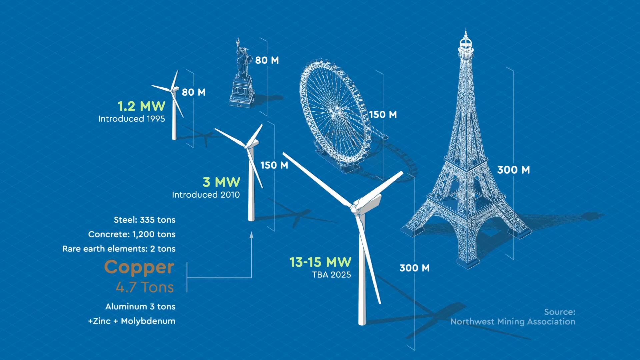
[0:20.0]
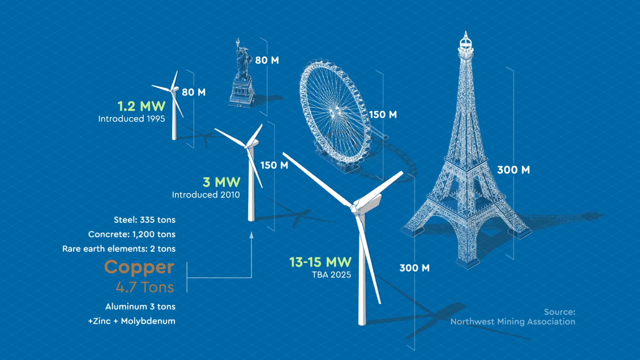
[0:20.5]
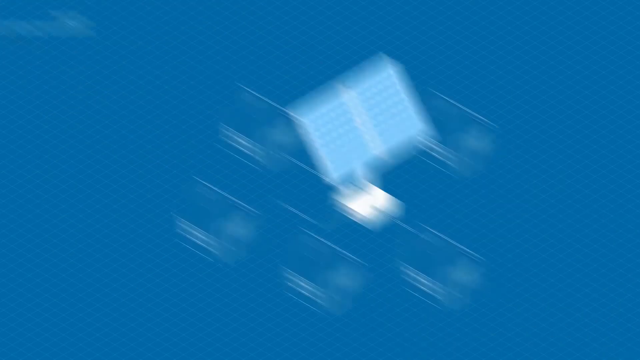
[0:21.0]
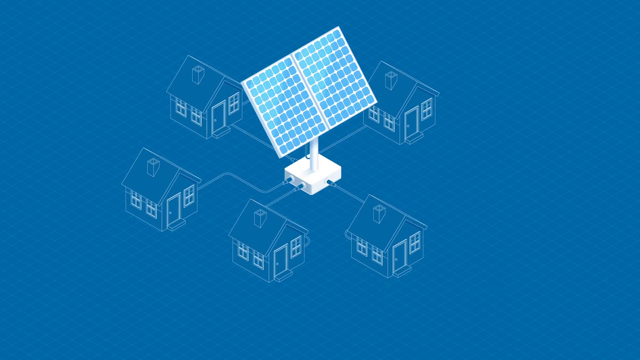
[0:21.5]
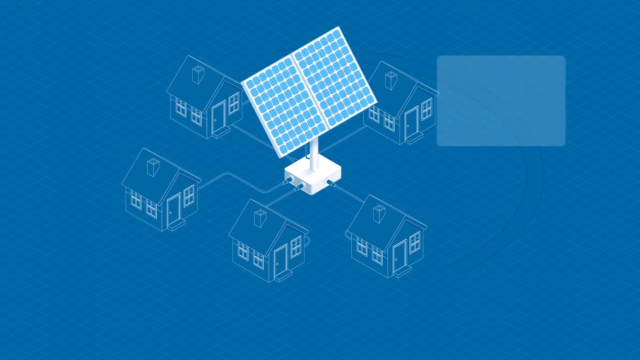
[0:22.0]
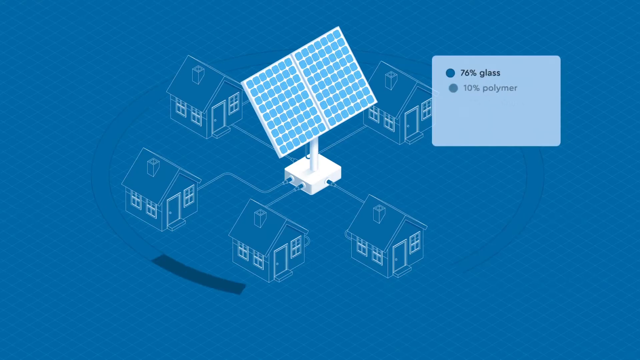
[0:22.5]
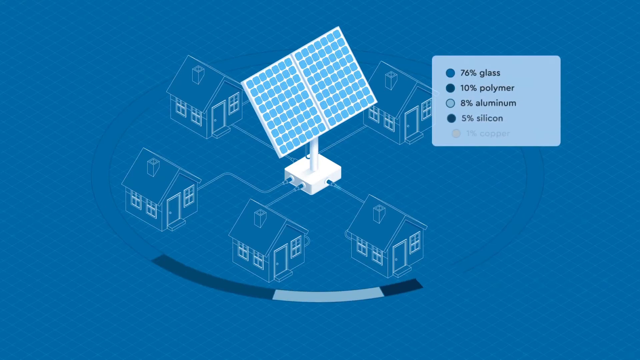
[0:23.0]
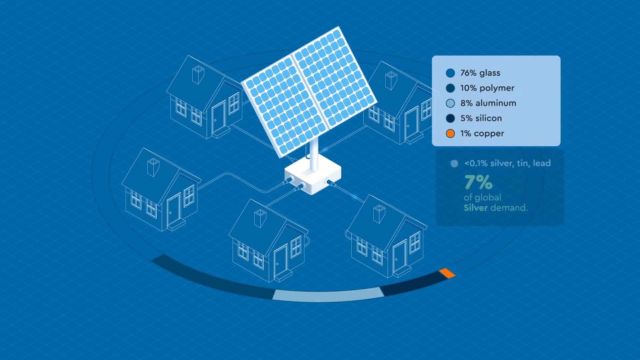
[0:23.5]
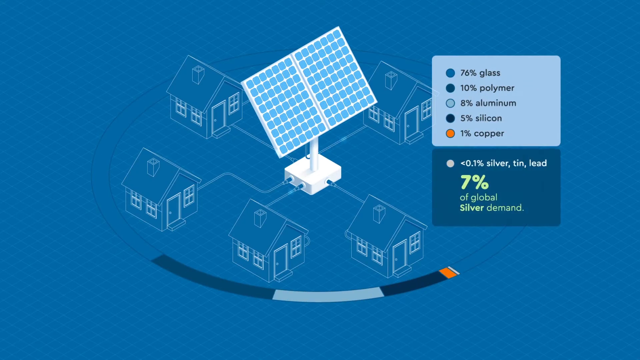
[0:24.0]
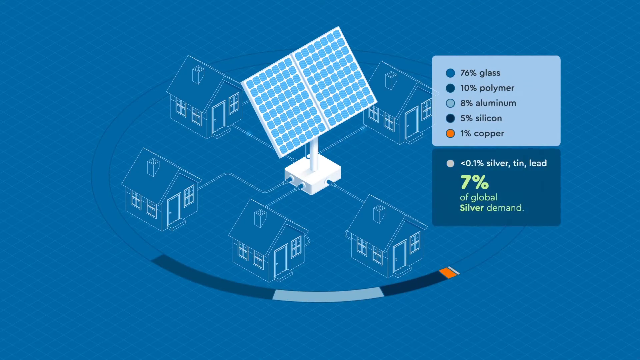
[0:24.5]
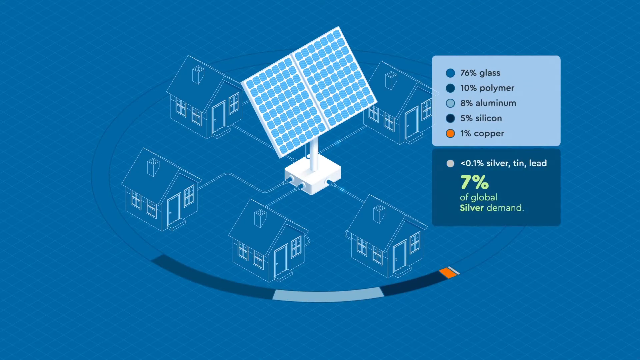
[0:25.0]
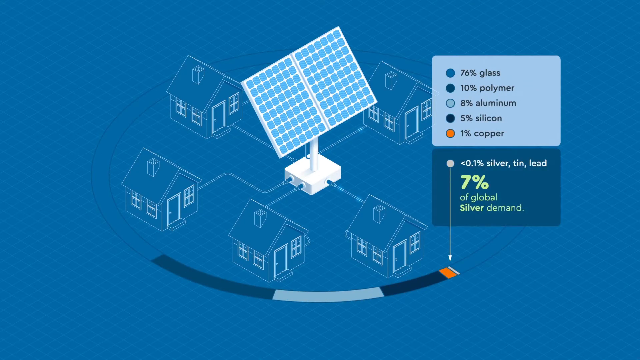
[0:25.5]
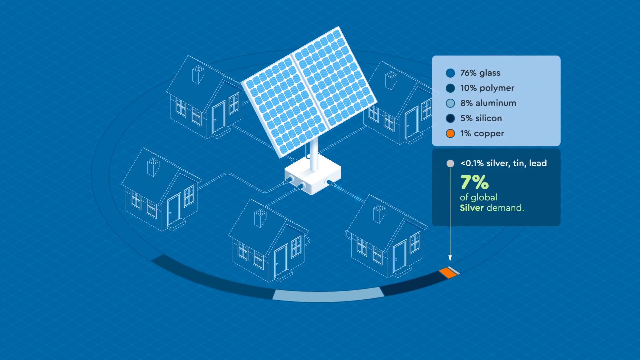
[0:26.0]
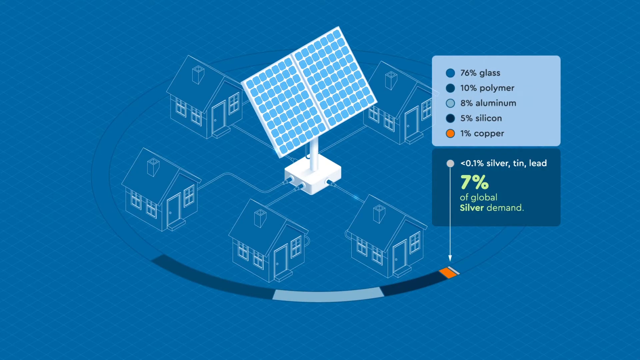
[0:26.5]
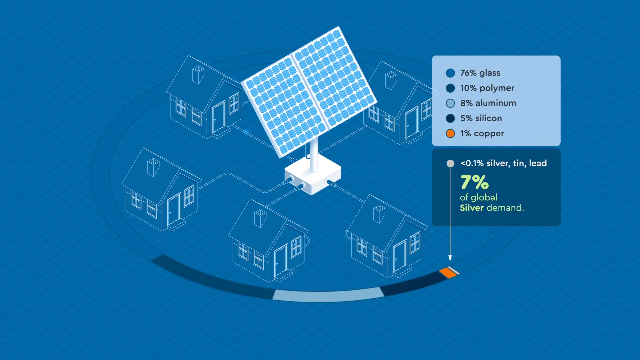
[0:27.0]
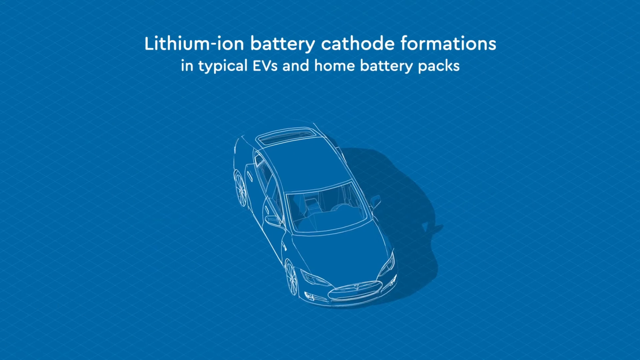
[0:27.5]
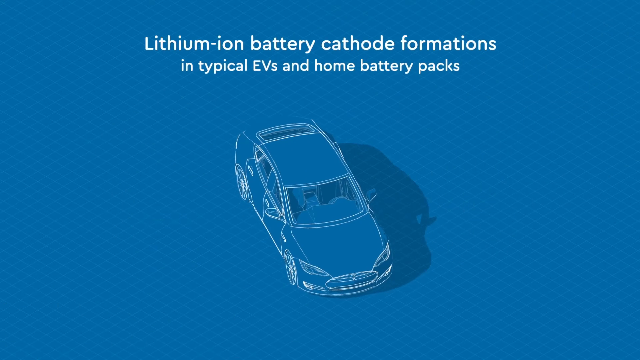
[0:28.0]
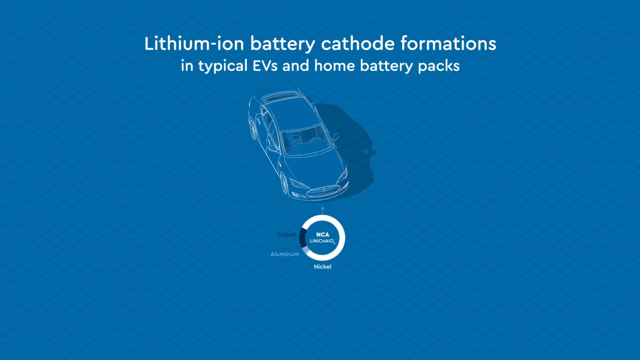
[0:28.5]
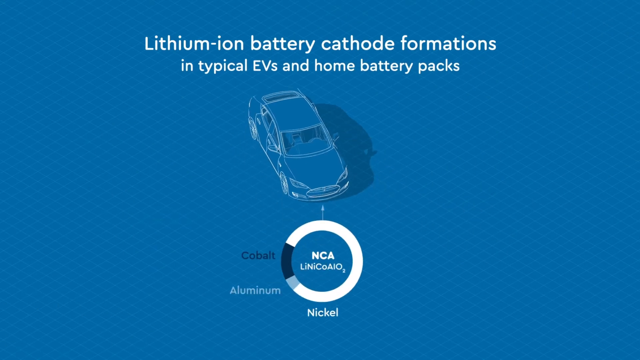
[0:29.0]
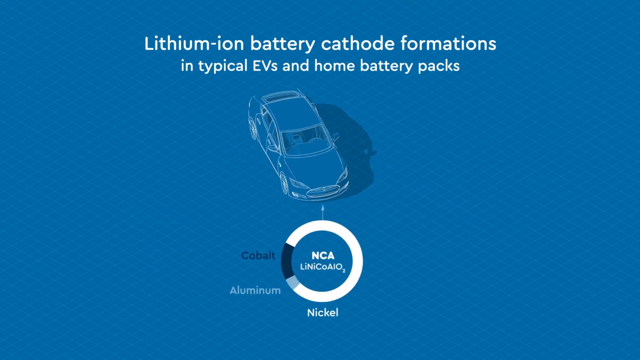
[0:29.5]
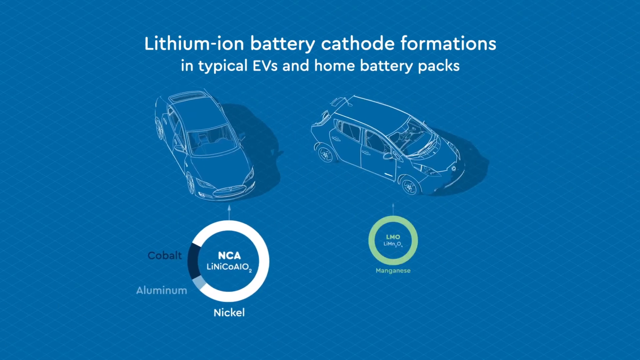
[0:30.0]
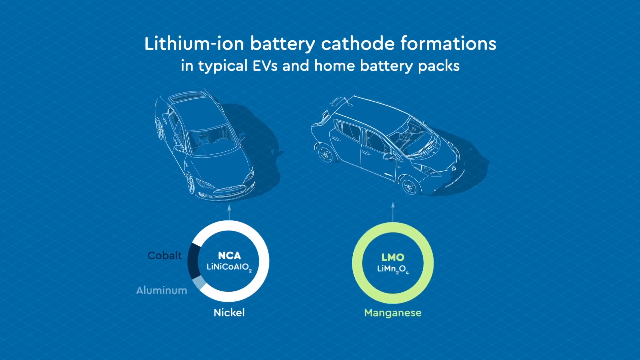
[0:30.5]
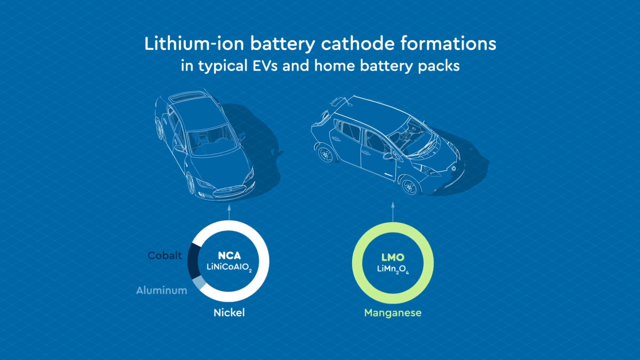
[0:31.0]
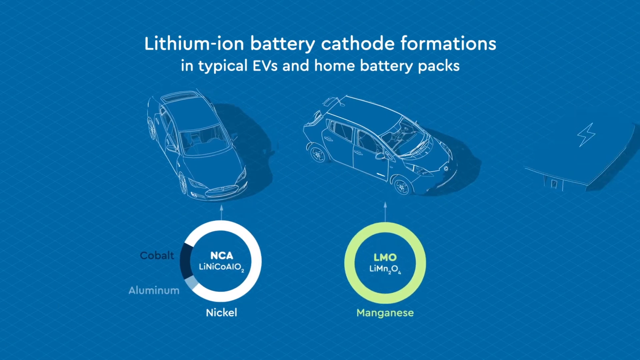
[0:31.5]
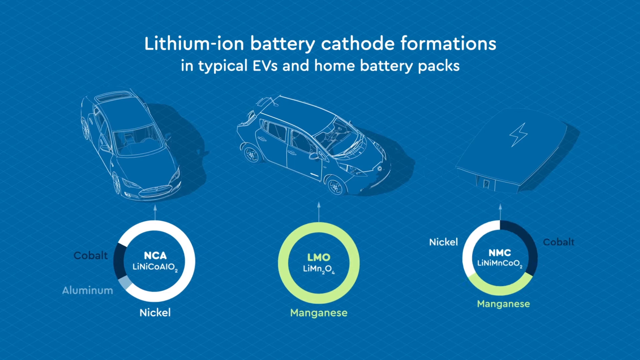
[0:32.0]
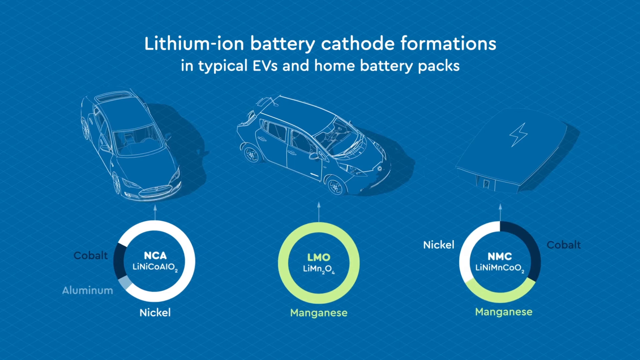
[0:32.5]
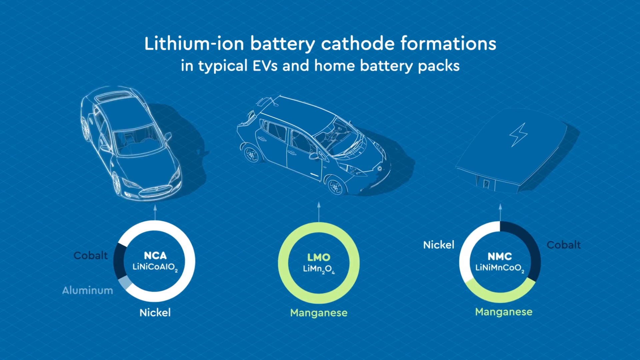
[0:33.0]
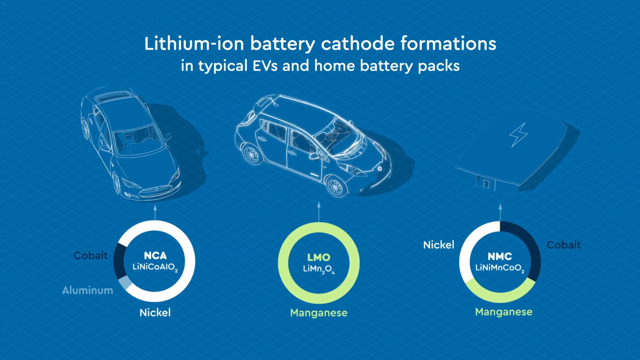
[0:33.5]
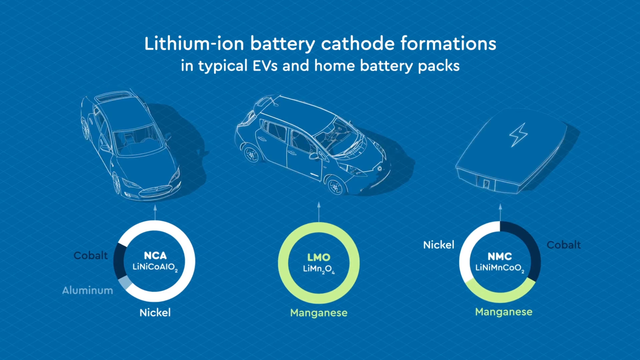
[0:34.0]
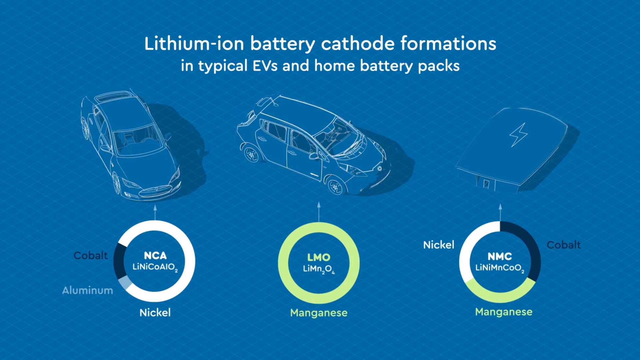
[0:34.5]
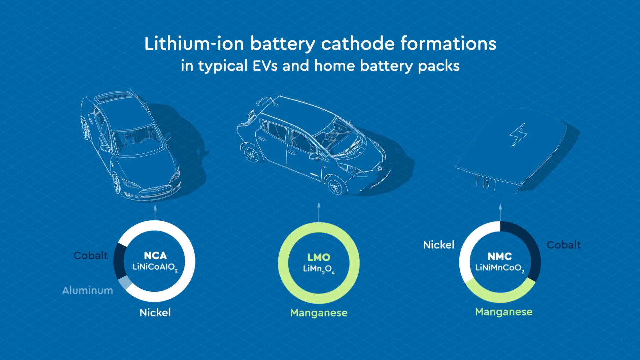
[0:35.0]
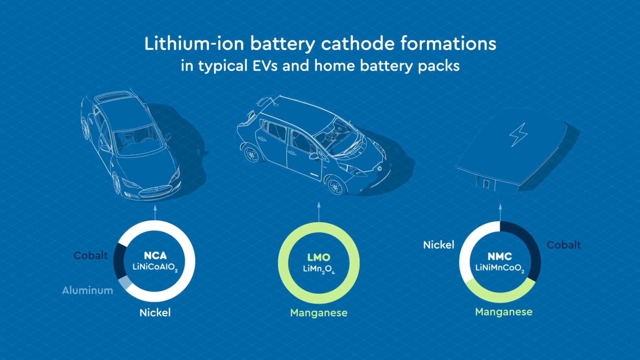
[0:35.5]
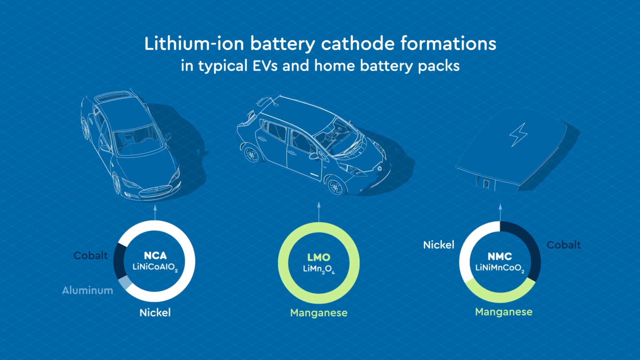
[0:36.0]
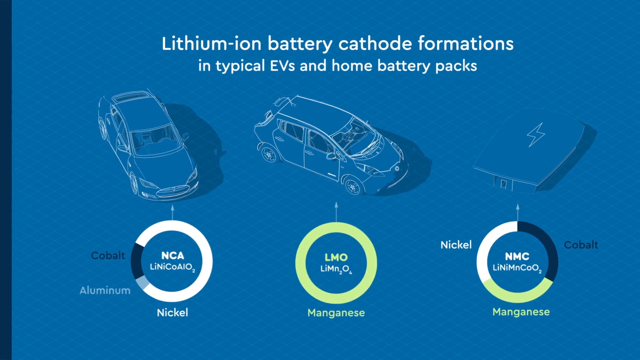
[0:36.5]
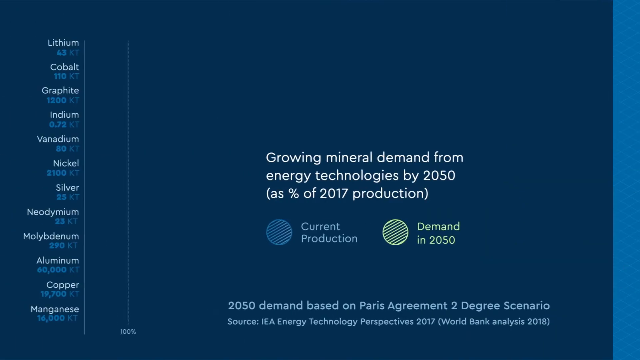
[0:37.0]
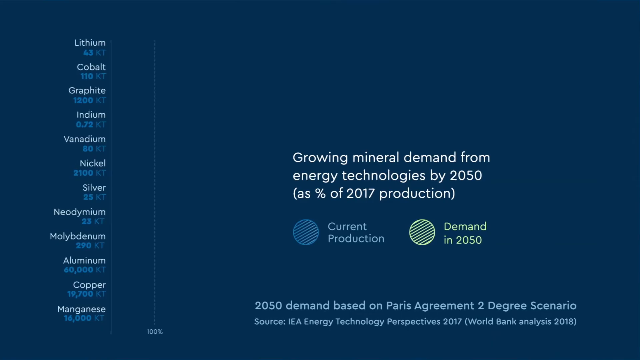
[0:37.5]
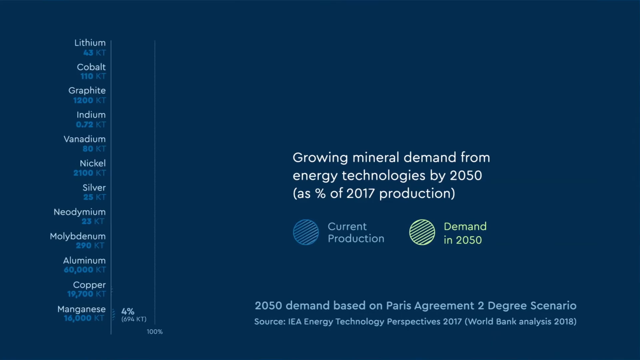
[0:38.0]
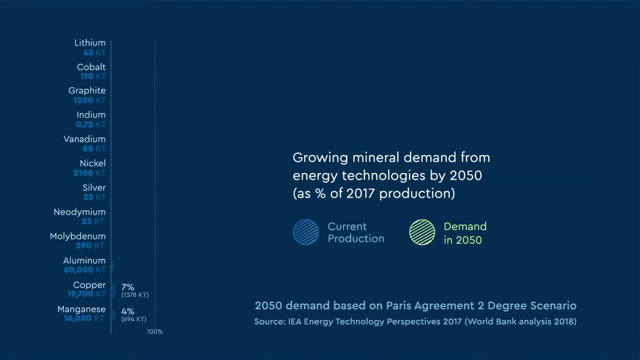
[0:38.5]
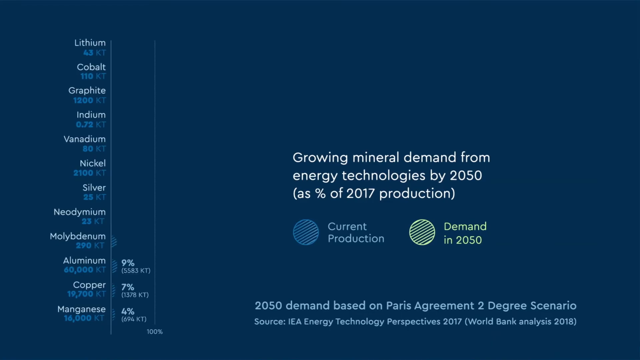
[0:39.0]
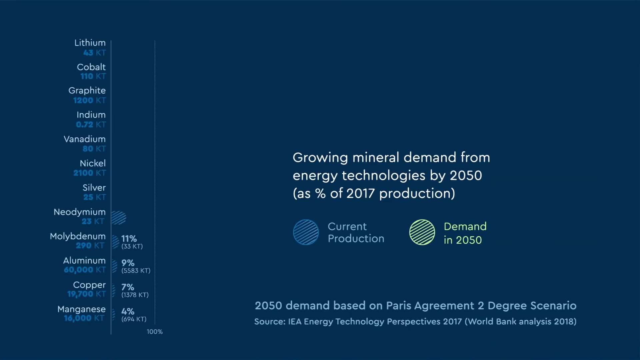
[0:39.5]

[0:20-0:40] The blue background shows the three white windmills with their introductions: the 1.2 MW in 1995, the 3 MW in 2010, and the 13 to 15 MW to be announced in 2025. Heights are compared with the Eiffel Tower, a Ferris wheel and what looks like the Statue of Liberty. The screen lists steel at 355 tons, concrete at 1,200 tons and rare earth elements at 2 tons, plus copper text that cannot all be read. The next panel shows four houses all linked to a solar panel, with a multicolored chart at the side reading 76% glass, 10% polymer, 8% aluminum, 5% silicone and 1% copper, along with less than 0.1% silver, 10% lead, and 7% of global silver demand. Then a picture of a vehicle appears with the text "lithium ion battery cathode formations in typical EVs and home battery packs" above it. The car is shown with cobalt, aluminum and nickel and a pie chart of how much is in each, labeled NCA along with another word that cannot be made out. Another drawing of a car is at the side, with "LMO" below it, and another drawing reads nickel, cobalt, "NMC," presumably battery types. The batteries appear to be powering individual things. The screens switch rapidly, showing the batteries powering cars and things in the home. Another chart lists lithium, cobalt, graphite, indium, vanadium, nickel, silver, neodymium, molybdenum, aluminum and copper under the text "growing mineral demand from energy technologies by 2050 as percent of 2017 production," showing current production and demand in 2050.